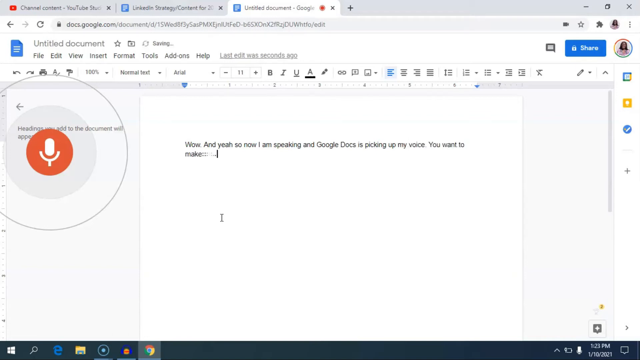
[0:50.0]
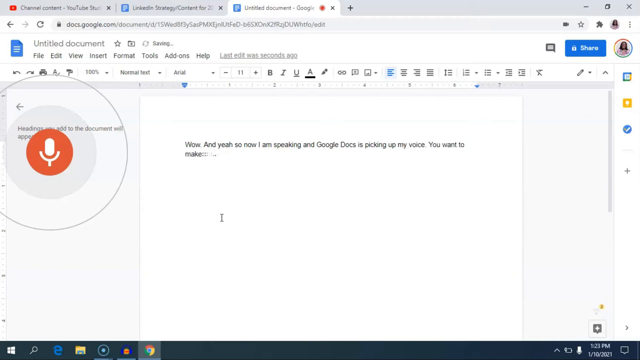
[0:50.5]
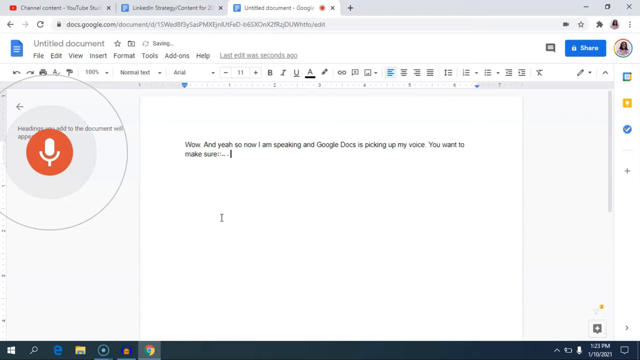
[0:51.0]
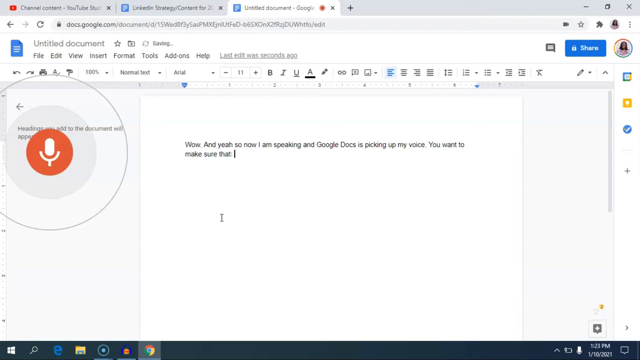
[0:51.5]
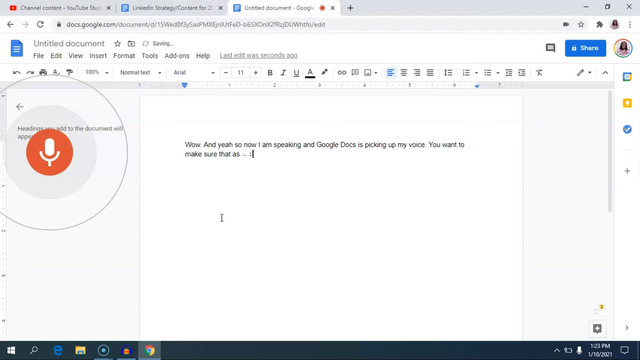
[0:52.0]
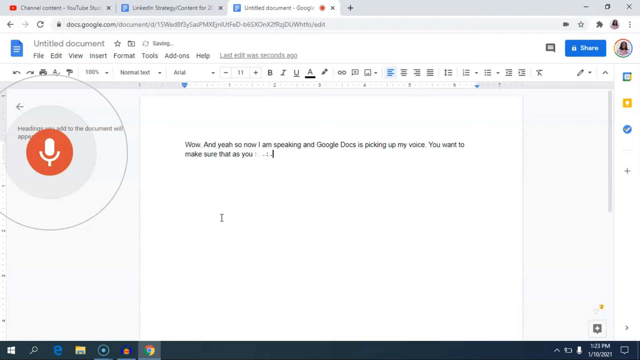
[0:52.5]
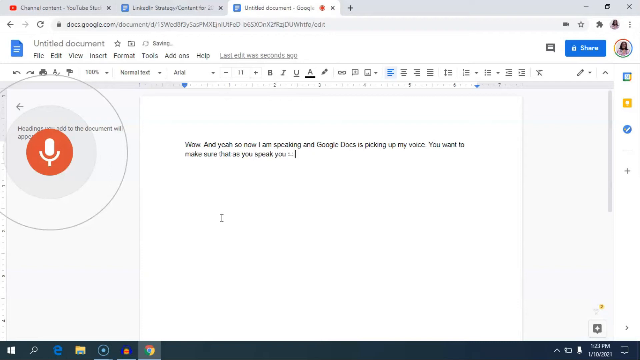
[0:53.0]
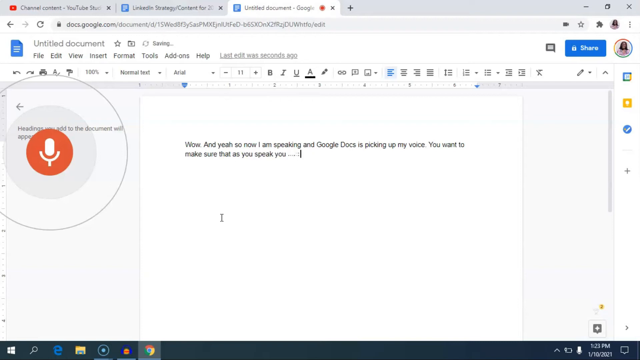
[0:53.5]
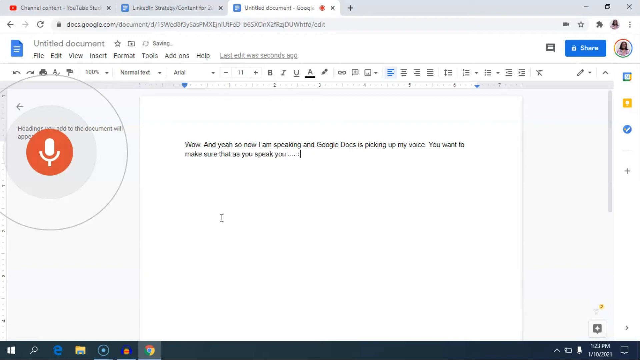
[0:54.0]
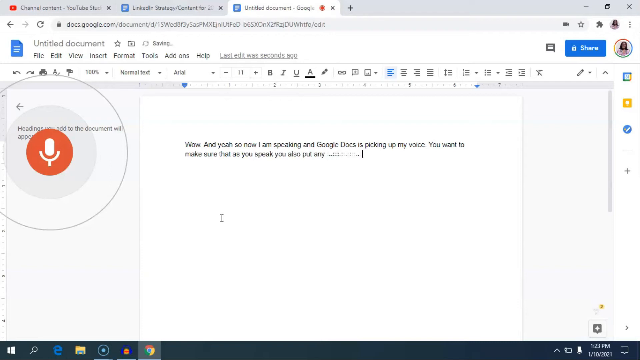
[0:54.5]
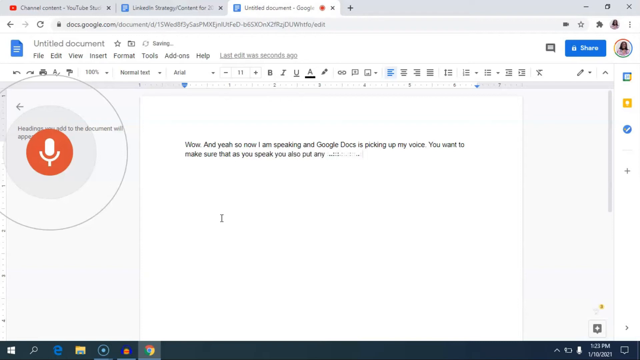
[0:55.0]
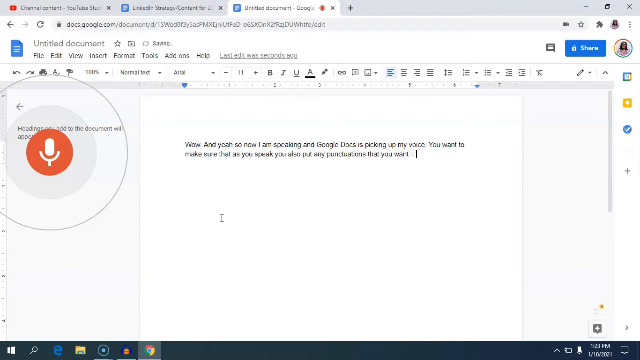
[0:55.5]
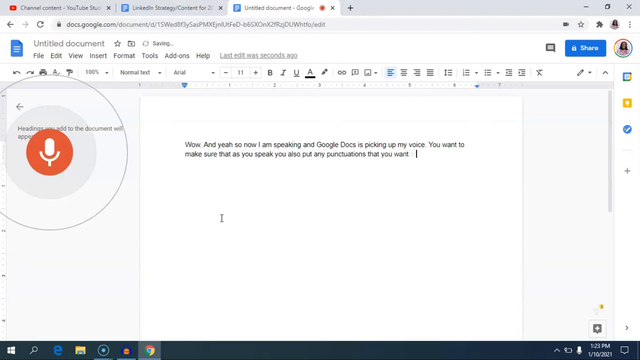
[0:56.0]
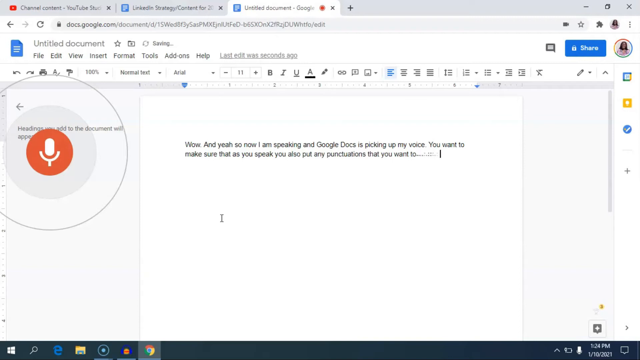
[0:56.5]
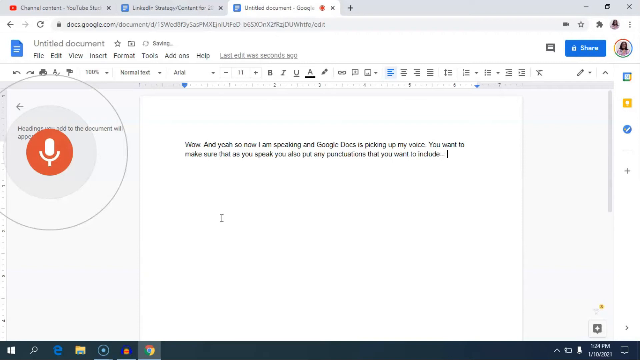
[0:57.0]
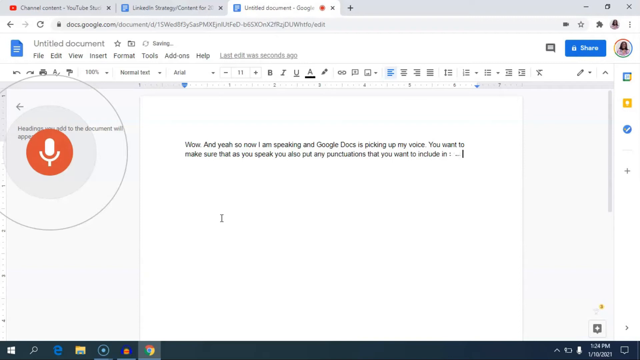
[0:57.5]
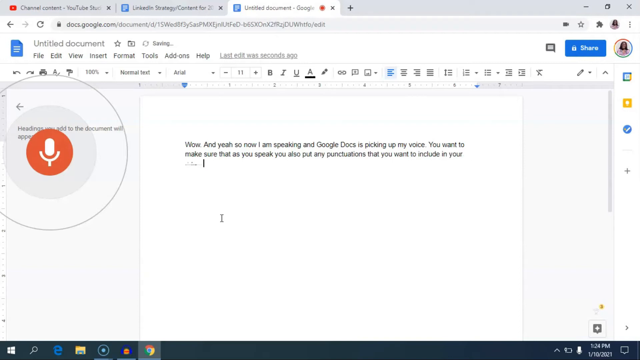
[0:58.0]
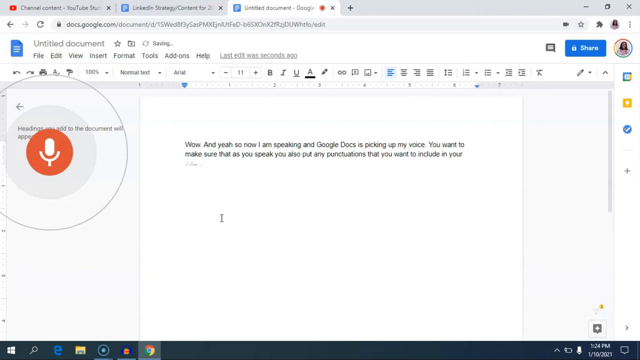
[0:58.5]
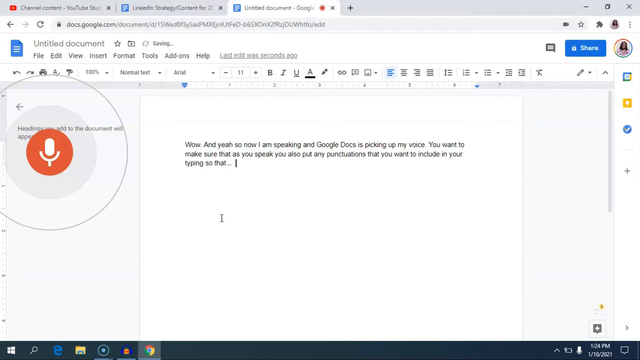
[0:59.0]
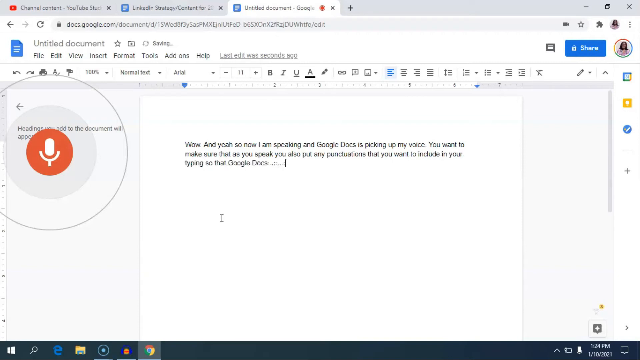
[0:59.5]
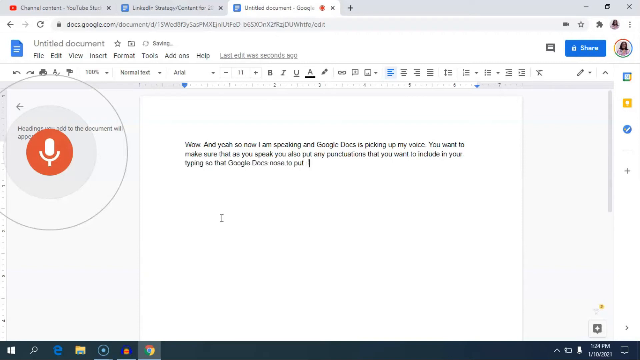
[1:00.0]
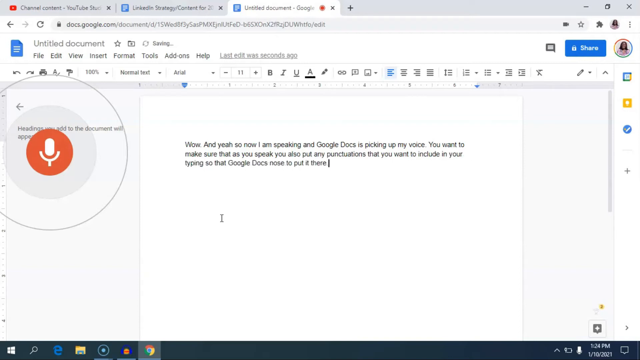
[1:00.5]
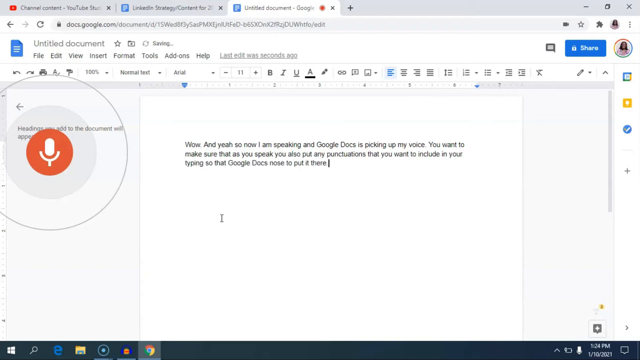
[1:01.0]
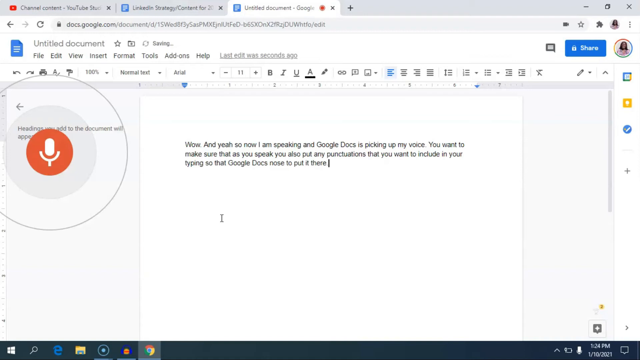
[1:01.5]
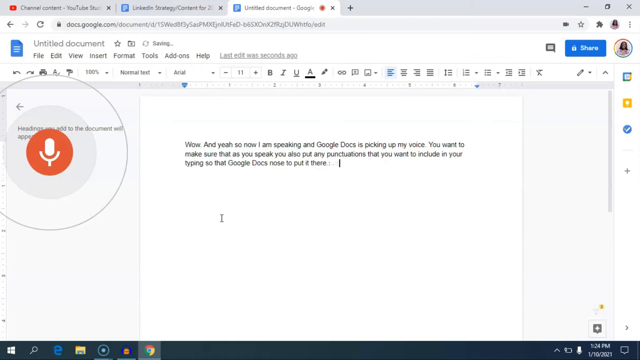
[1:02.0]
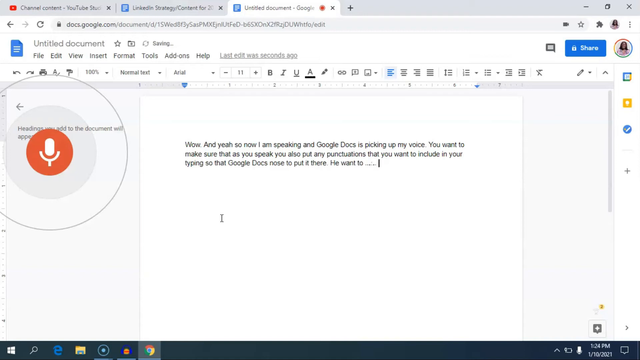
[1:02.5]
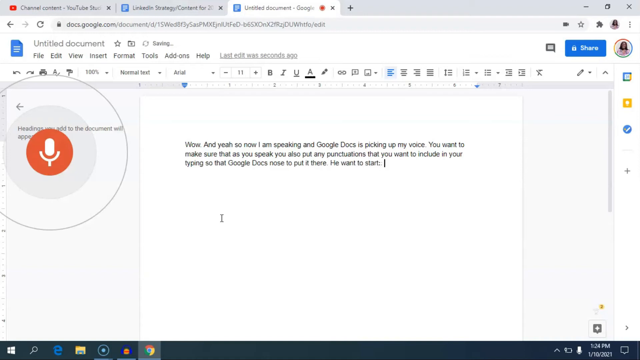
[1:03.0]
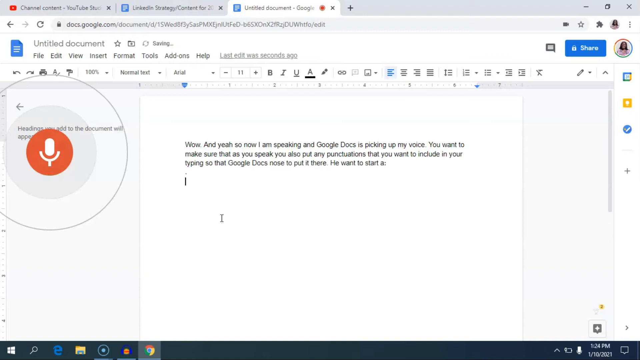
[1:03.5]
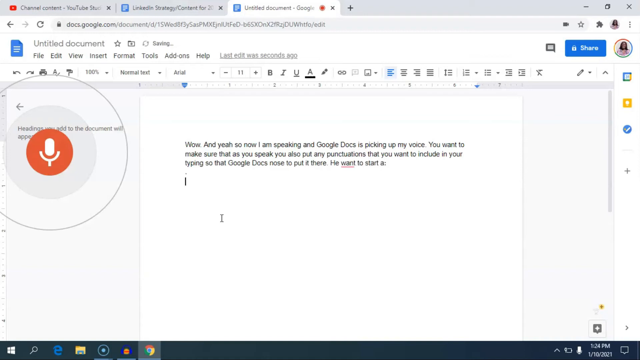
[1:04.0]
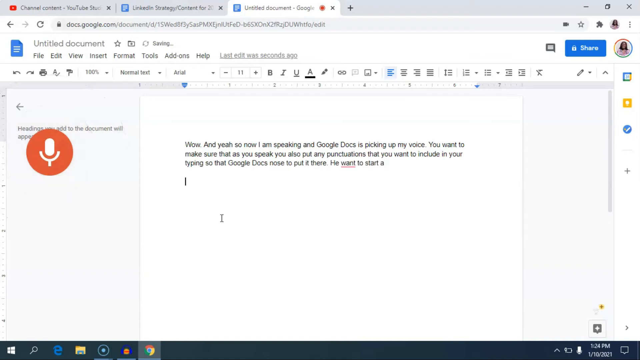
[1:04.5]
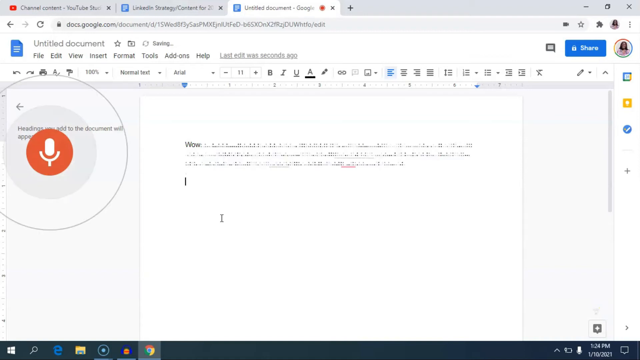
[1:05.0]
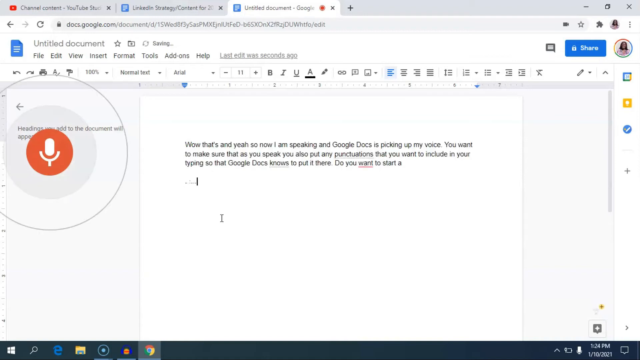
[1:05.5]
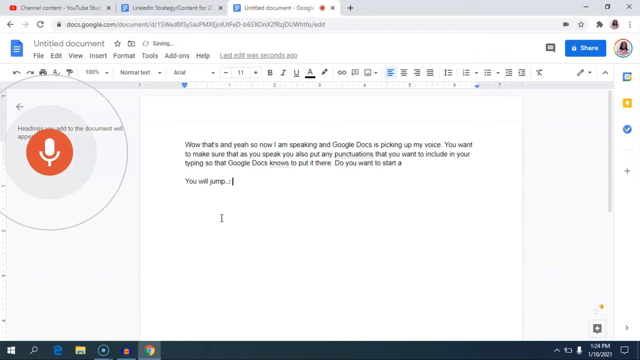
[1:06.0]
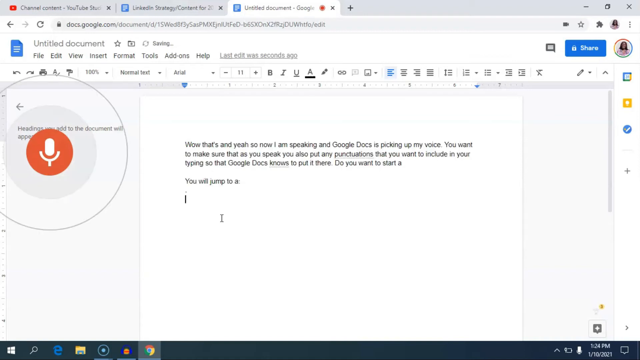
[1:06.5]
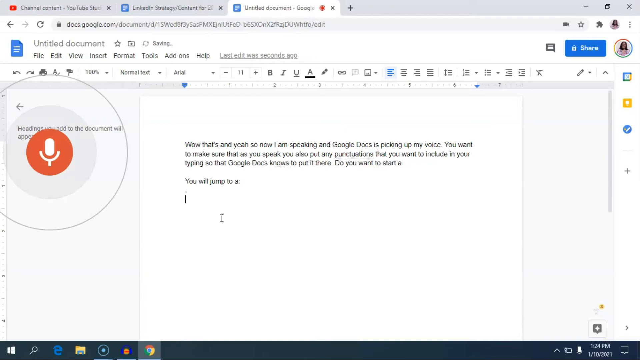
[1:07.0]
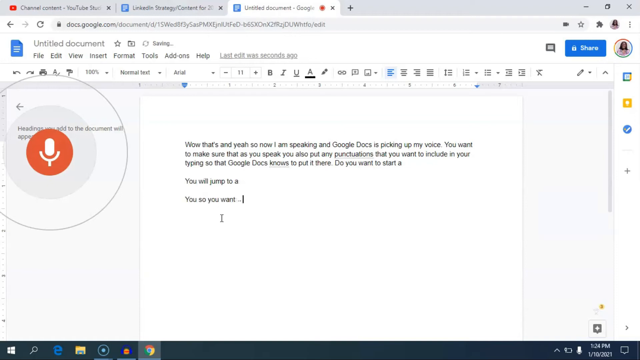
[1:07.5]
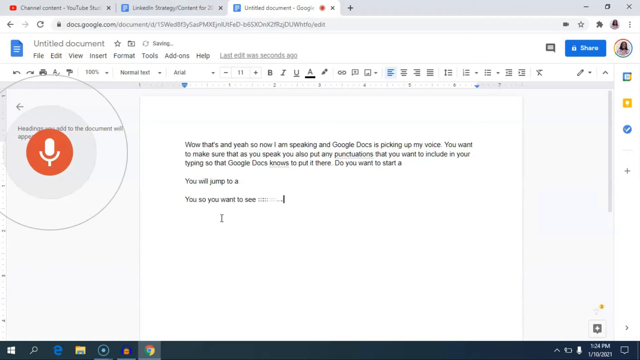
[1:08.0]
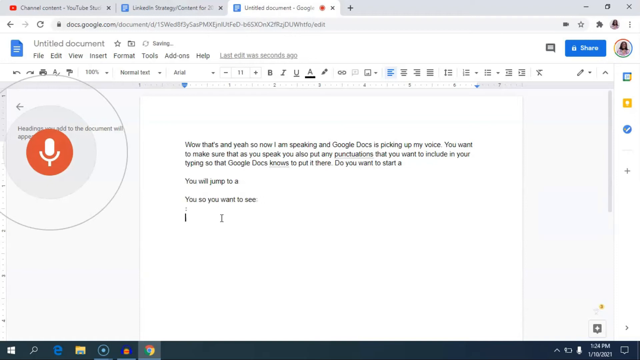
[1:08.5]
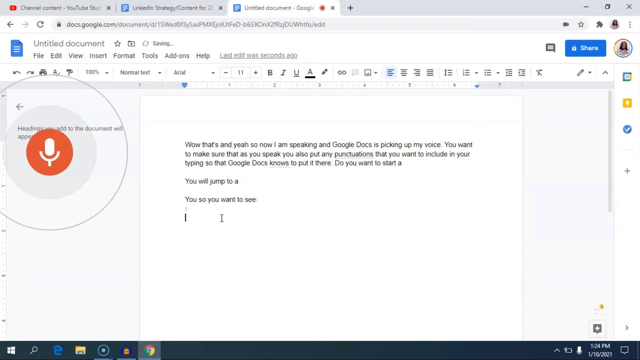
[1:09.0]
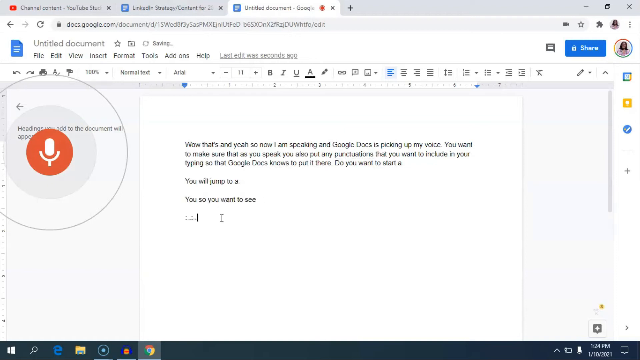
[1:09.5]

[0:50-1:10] She continues talking into the microphone as words pop up in the Google document, seemingly seamlessly and with apparently no real mistakes at first. The text jumps down a line, dropping down a couple of lines. The text reads "make sure that you speak, you also put any punctuations that you want to include in your typing so that Google Docs", then "Do you want to start a", then "you will jump to a, you will want to see". There is a speech-to-text mistake: the word is spelled "nose" instead of "knows".